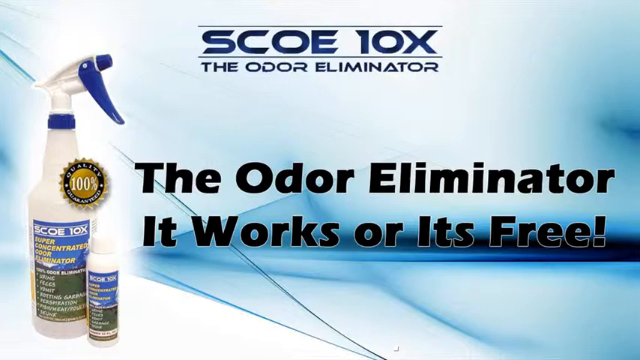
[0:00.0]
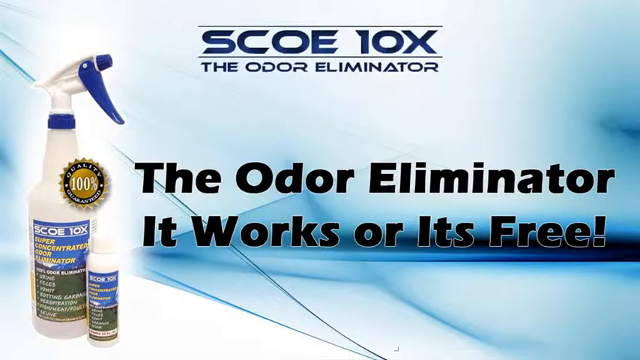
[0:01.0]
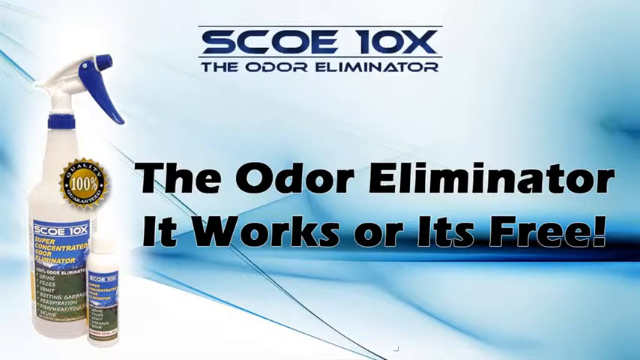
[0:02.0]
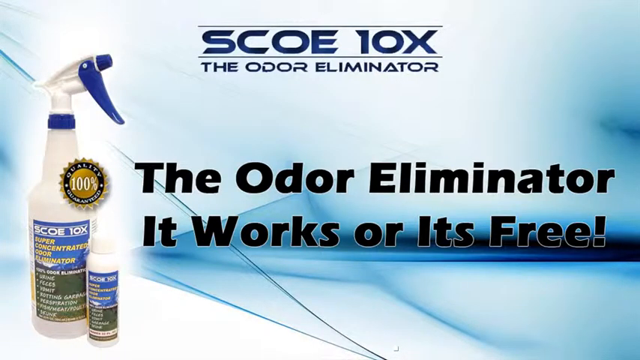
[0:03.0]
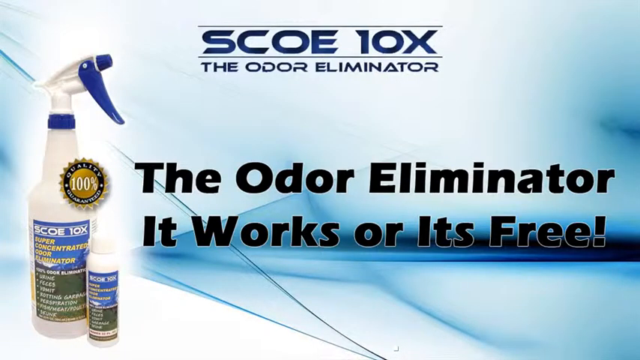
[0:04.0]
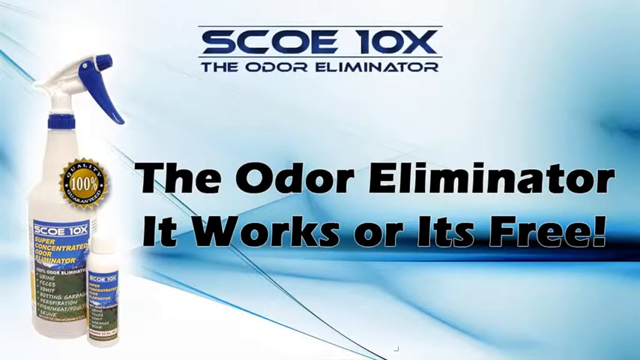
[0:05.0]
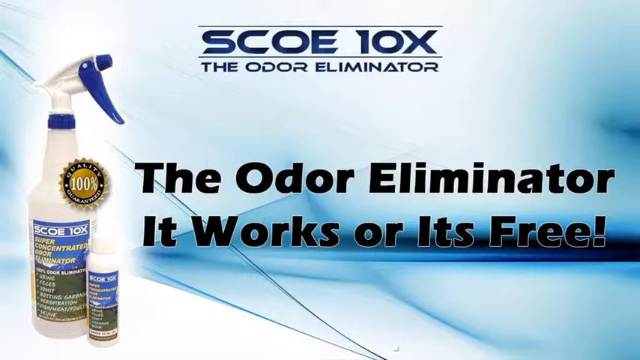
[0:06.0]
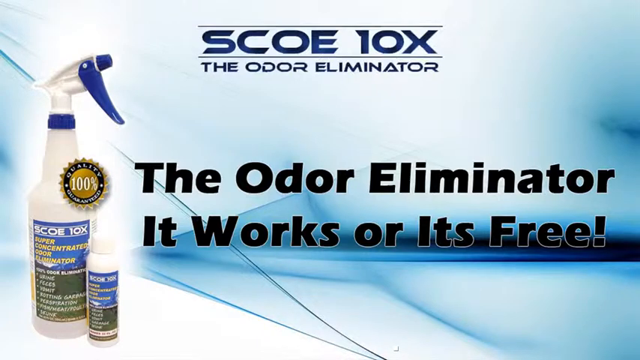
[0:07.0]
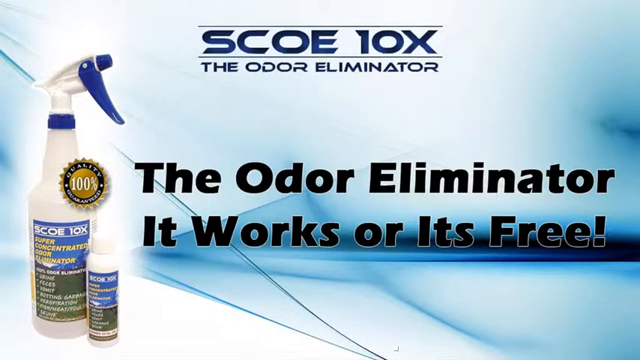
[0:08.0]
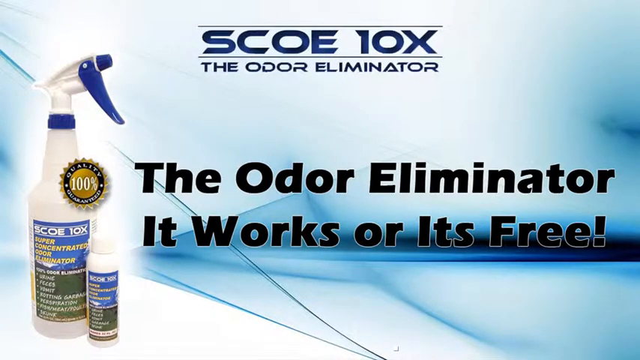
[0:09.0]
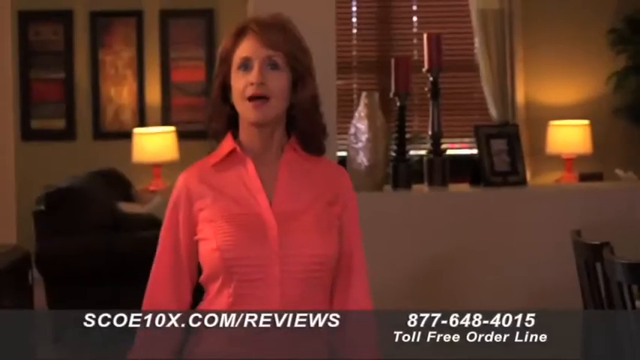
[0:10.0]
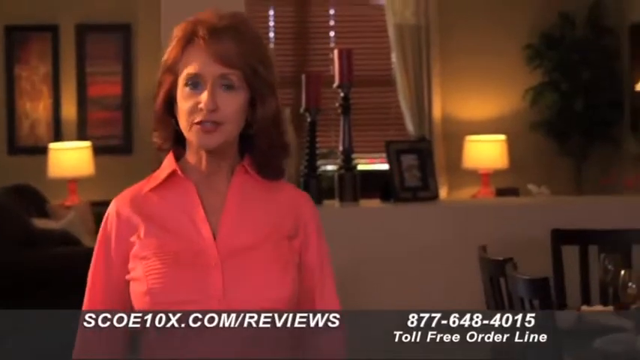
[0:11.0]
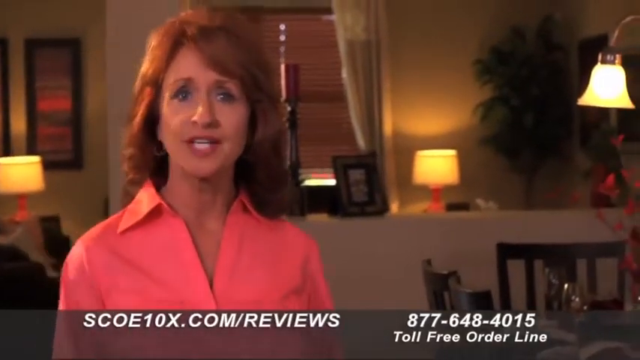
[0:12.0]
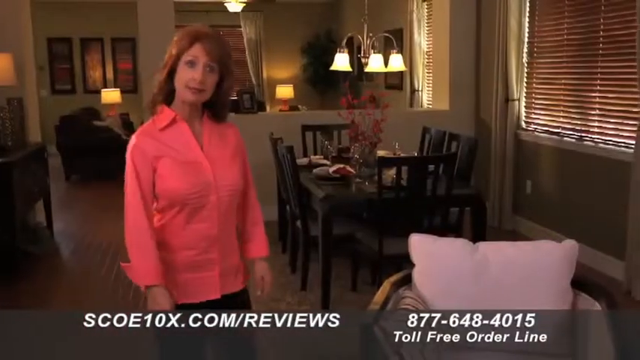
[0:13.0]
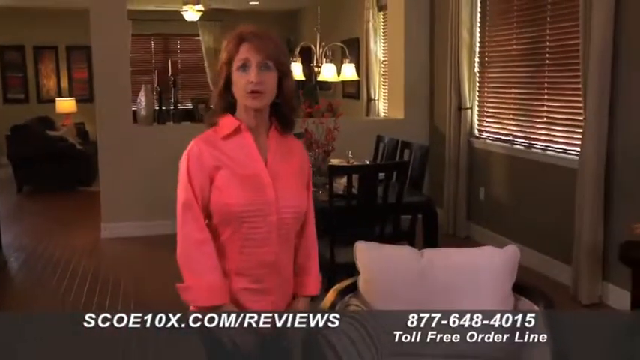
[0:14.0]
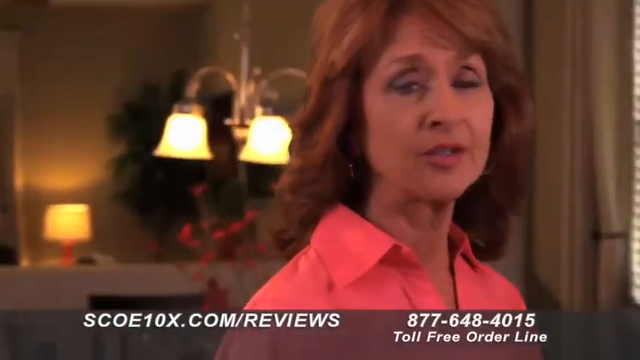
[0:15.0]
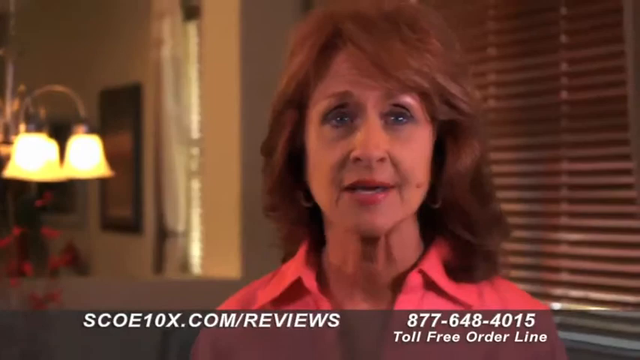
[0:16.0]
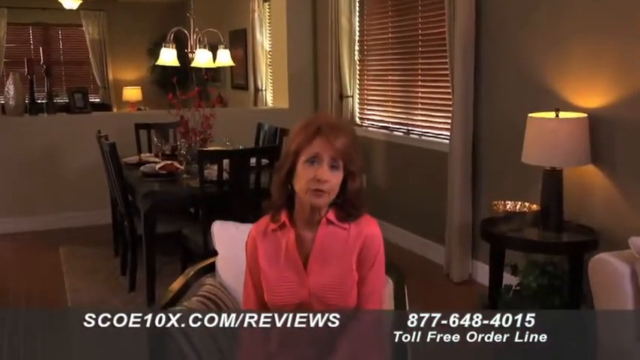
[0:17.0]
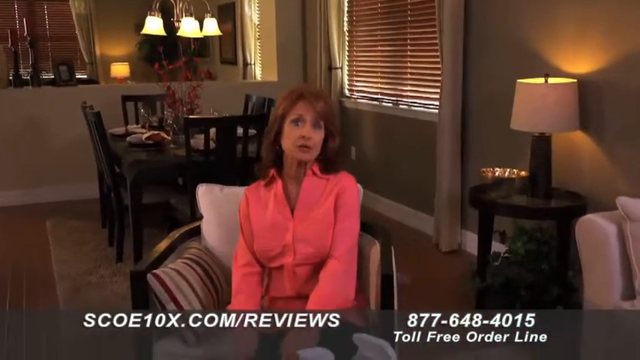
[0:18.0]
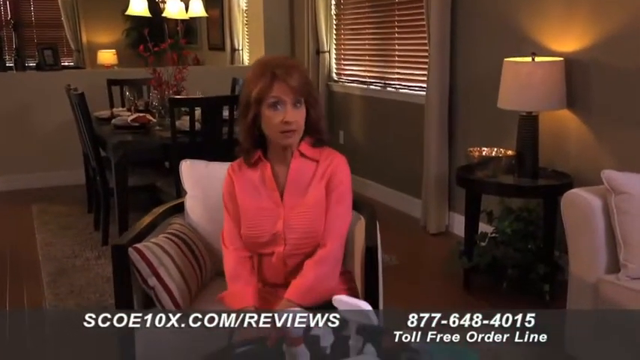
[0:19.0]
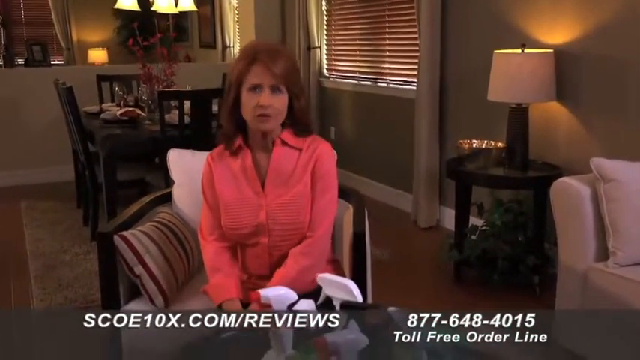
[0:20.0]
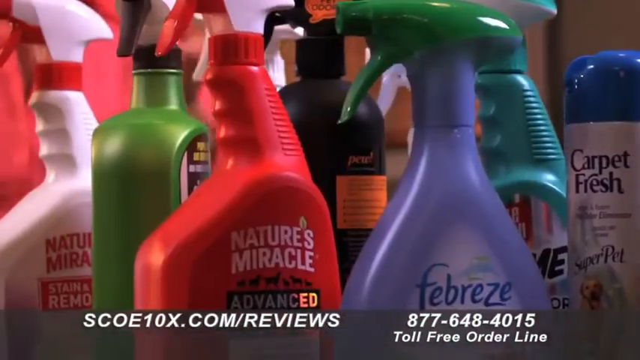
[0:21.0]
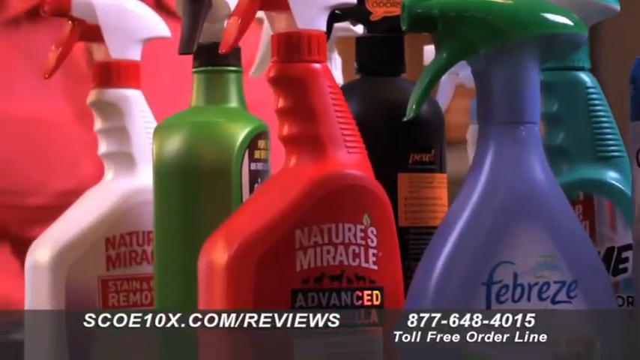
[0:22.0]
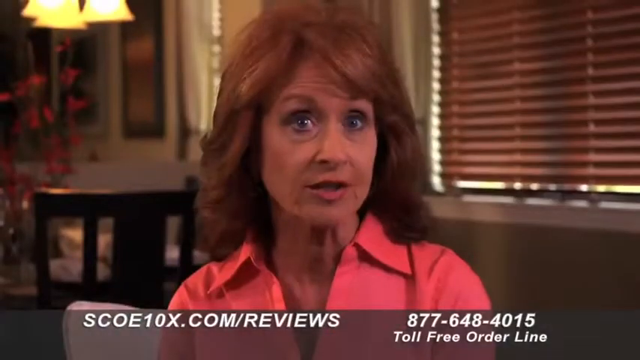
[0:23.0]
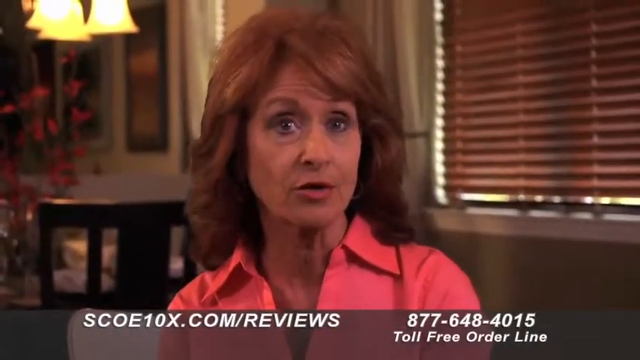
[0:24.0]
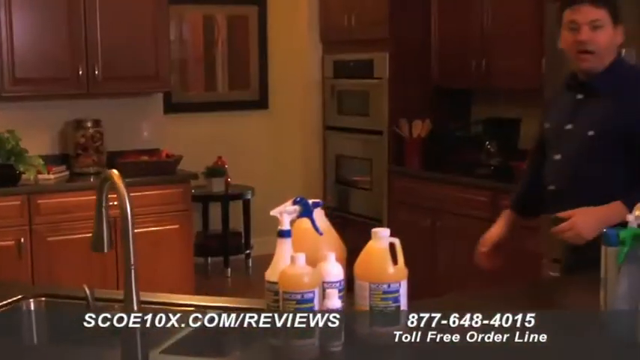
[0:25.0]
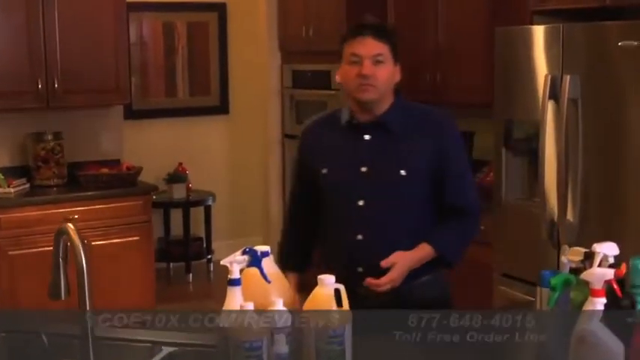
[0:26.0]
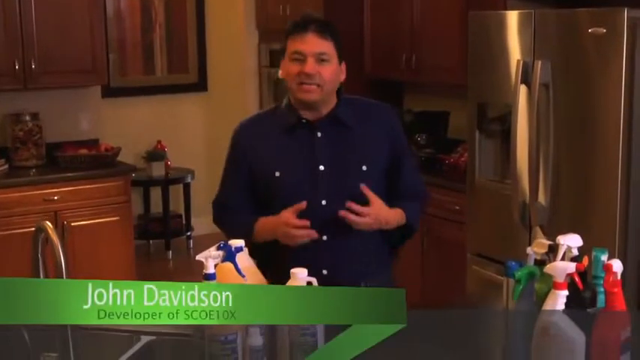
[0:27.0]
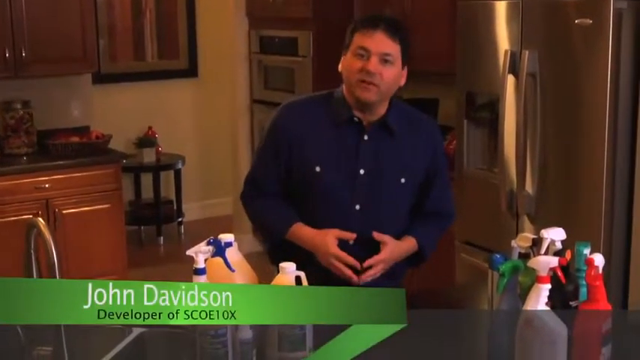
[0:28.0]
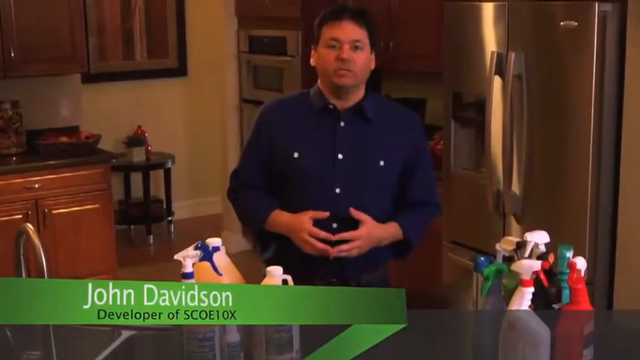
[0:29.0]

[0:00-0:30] The video appears to be for a product called Sko 10X, seemingly an odor-eliminating product. The background is blue and white, kind of fading into each other, looking like a stock PowerPoint background. On the left is a white spray bottle with some blue accents, which is the Sko 10X product. To the right of it is a smaller white bottle with a small cap, and to the right of that, in the center, text says "the odor-eliminator, it works or it's free." The camera lingers on the product for a few seconds. On the upper left, right on top of the spray bottle, it says "quality 100% guarantee" in a little gold circle or sticker. The video then cuts to a white woman in a long-sleeve pink shirt walking toward the camera. She seems to be discussing some kind of issue she is having, with a concerned look on her face, and kind of shakes her head in disapproval as she walks toward the camera. The camera zooms out a bit, and she seems to be standing or walking in a dining area of some kind of home. She walks a bit further, in front of a chair that is there.